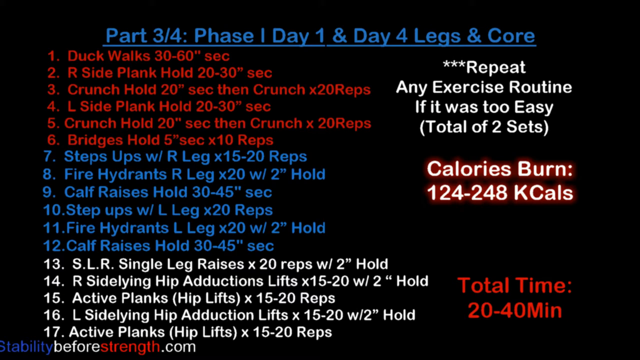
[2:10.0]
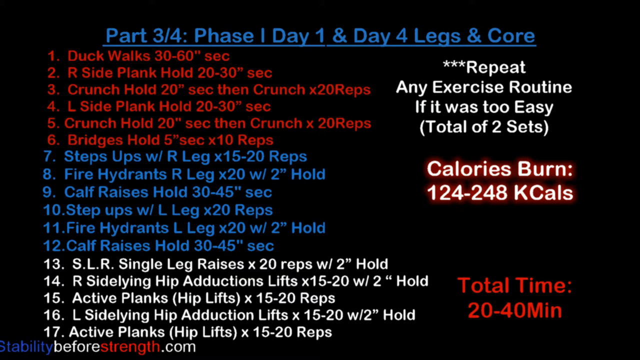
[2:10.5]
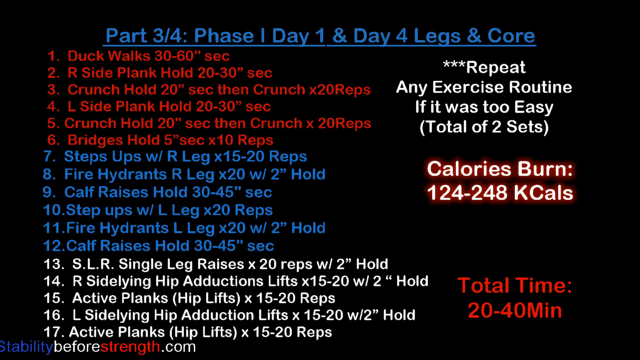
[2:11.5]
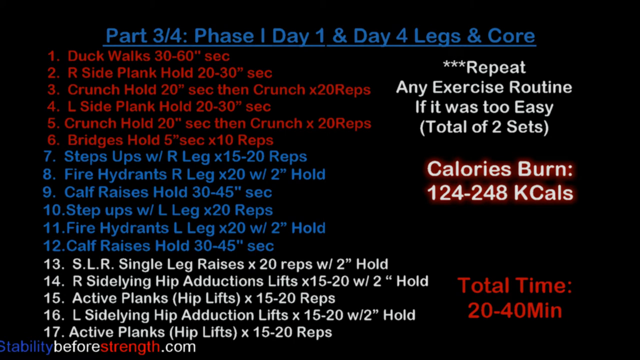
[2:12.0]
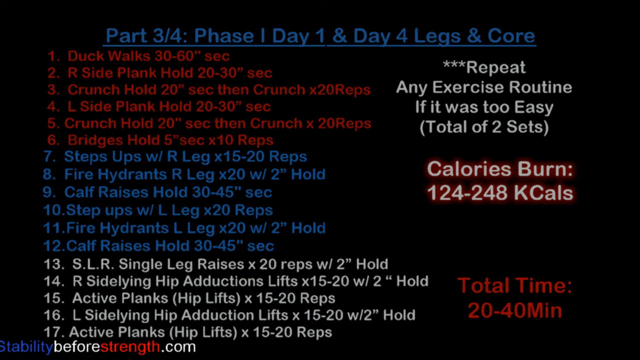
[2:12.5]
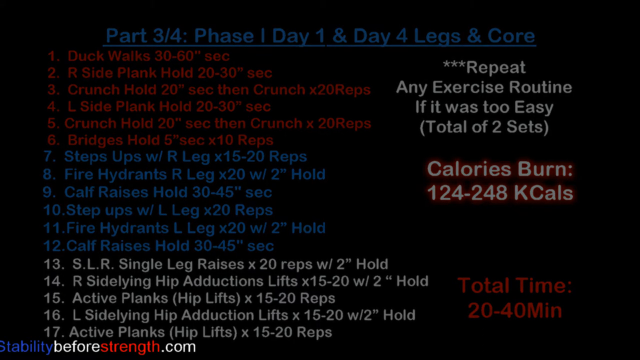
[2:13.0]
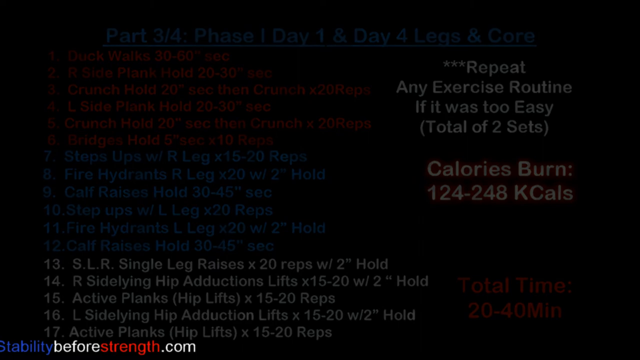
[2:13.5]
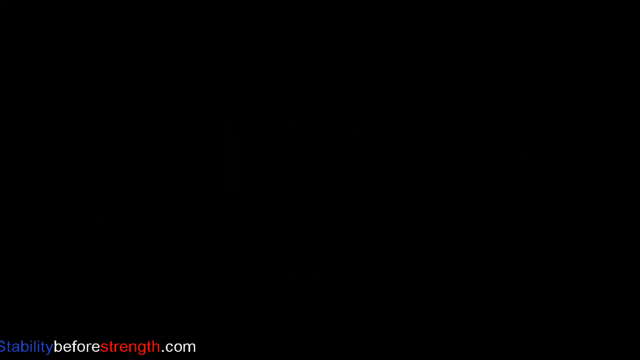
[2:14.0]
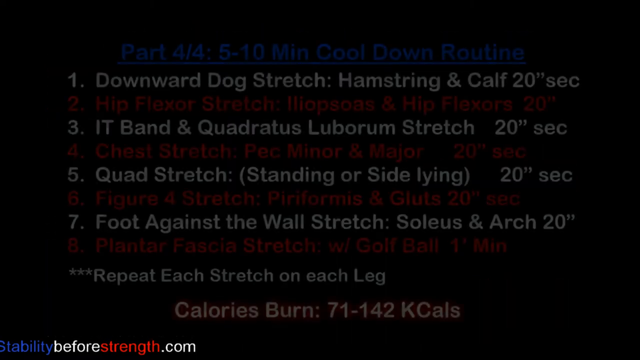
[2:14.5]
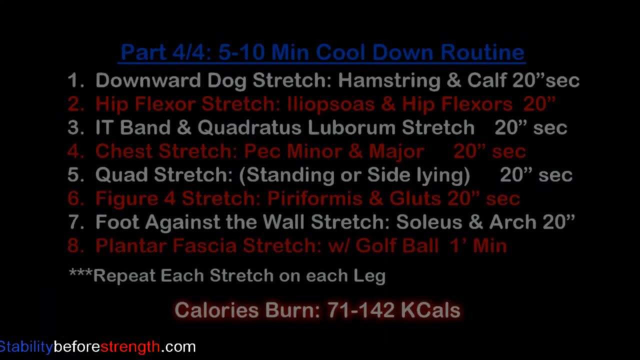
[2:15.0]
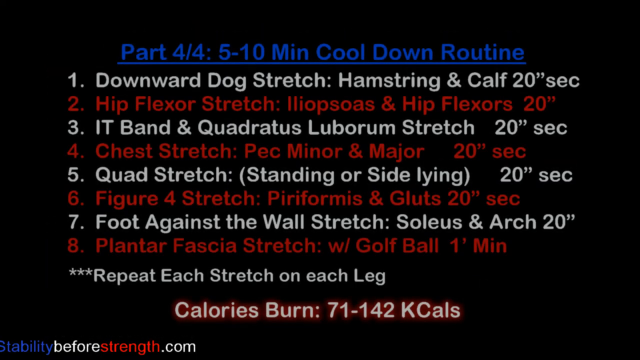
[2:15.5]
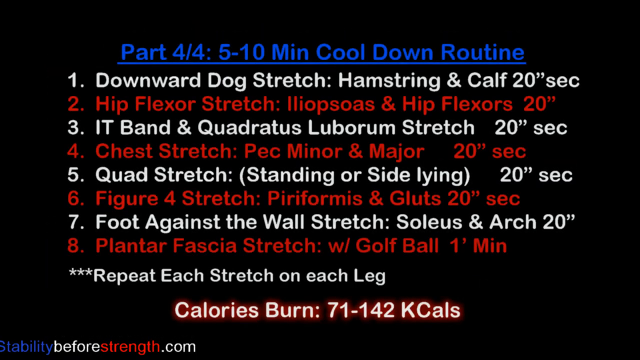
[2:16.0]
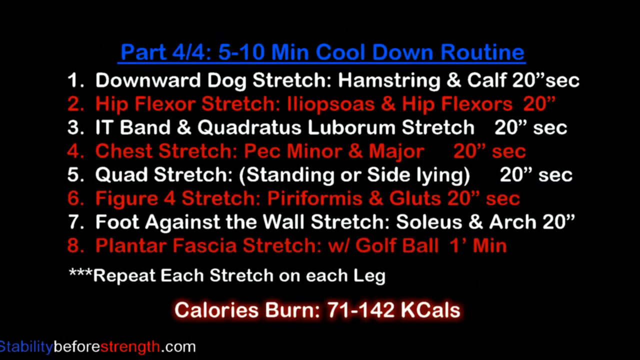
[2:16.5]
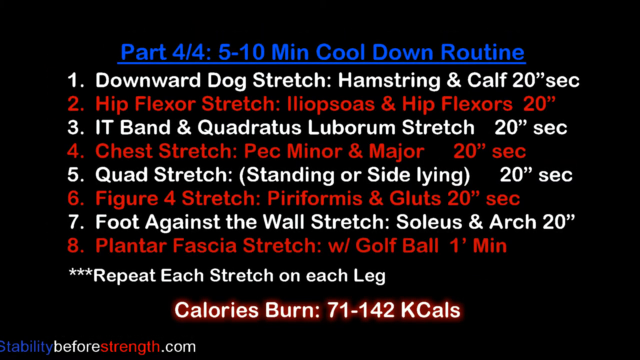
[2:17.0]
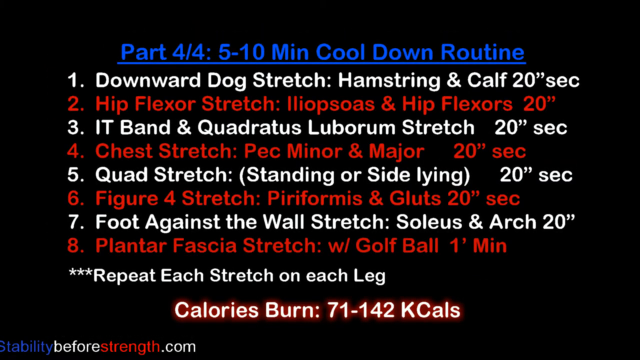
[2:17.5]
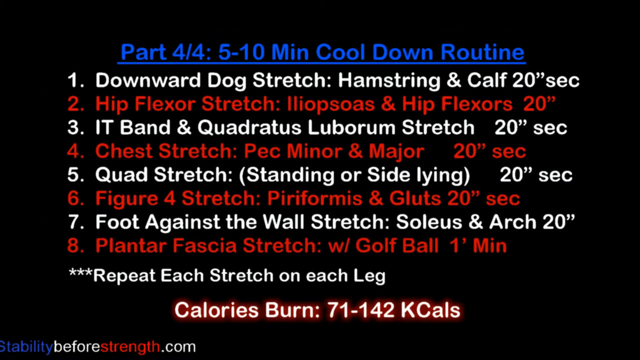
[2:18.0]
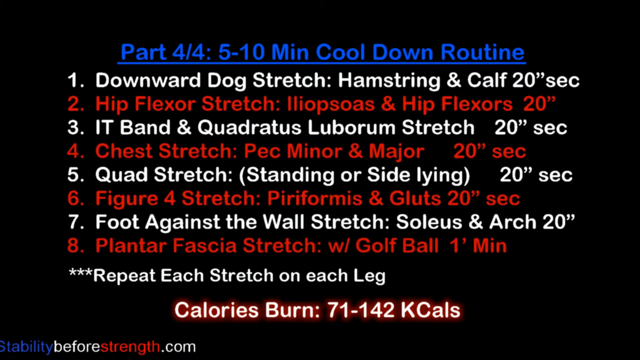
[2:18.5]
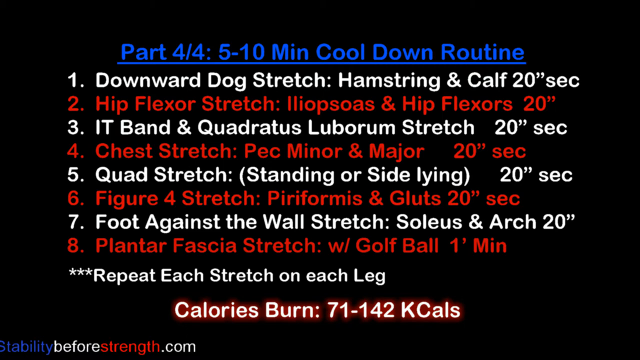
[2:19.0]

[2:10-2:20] Numbers 13 to 17 are the white exercises: number 13 is SLR, single leg raises, 20 reps with a 2 second hold; number 14 is R side laying hip abduction lifts, 15 to 20 with a 2 second hold; number 15 is active planks, hip lifts, 15 to 20 reps; number 16 is L side-lying hip abduction lifts, 15 to 20 with a 2 second hold; and number 17 is active planks hip lifts, 15 to 20 reps. The screen then fades out to part 4 of 4, a 5 to 10 minute cool down routine. The top part is written in blue and the rest alternates white and red, with the odd numbers in white and the even numbers in red. There are 8 different exercises, and at the bottom an asterisk precedes the text "repeat each stretch on each leg".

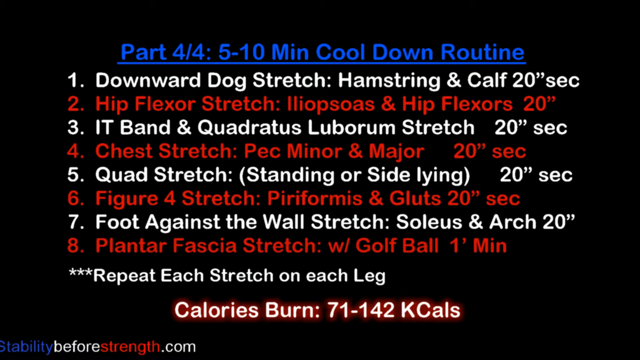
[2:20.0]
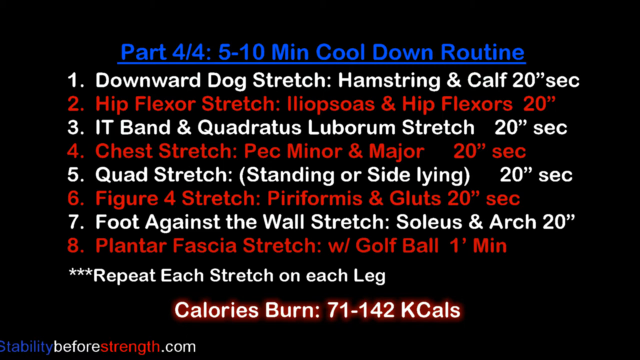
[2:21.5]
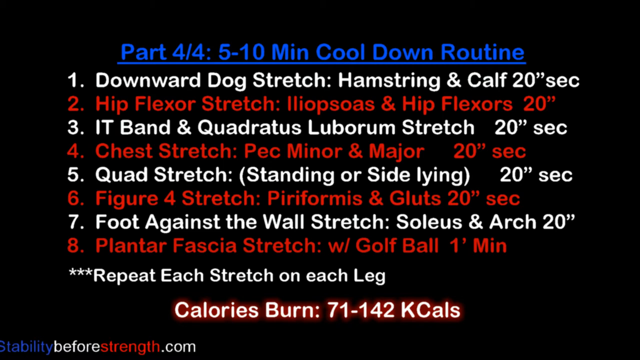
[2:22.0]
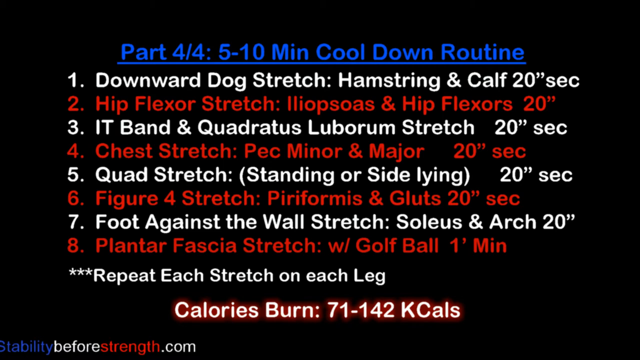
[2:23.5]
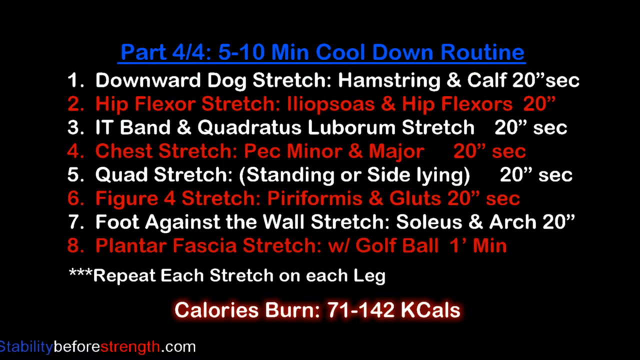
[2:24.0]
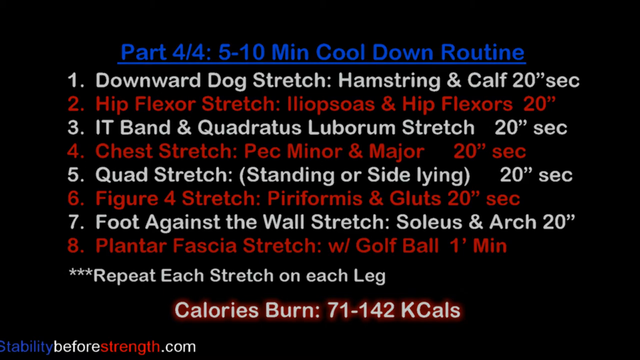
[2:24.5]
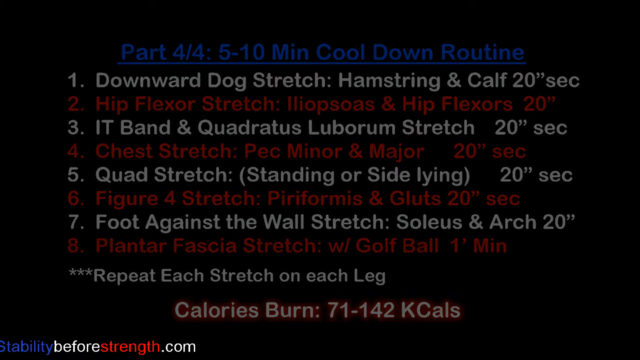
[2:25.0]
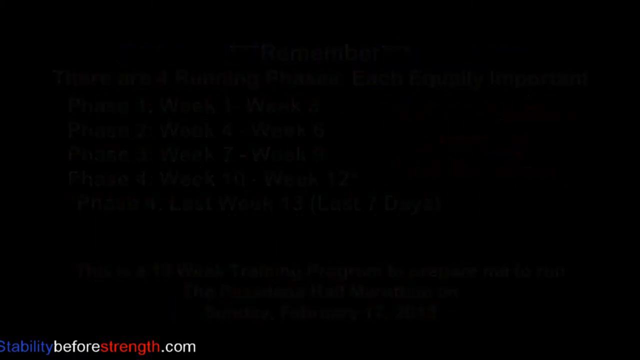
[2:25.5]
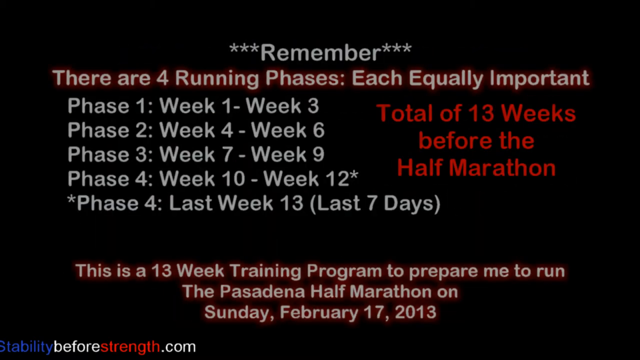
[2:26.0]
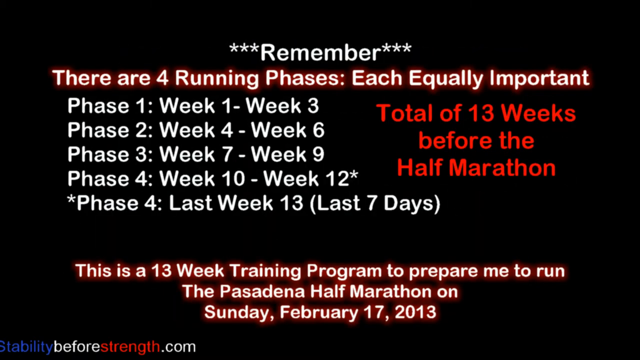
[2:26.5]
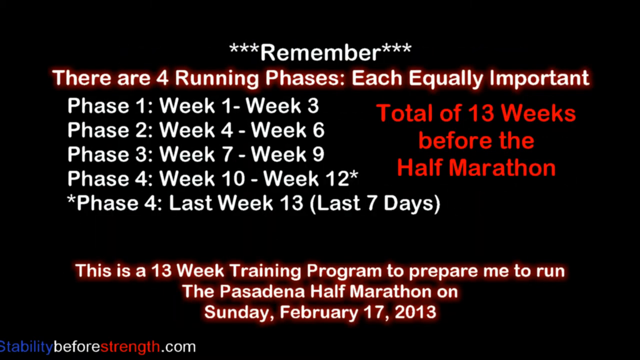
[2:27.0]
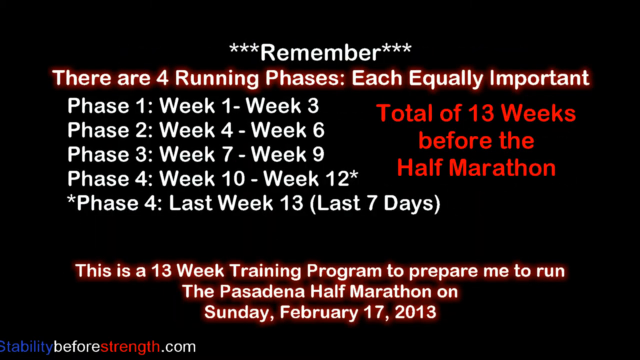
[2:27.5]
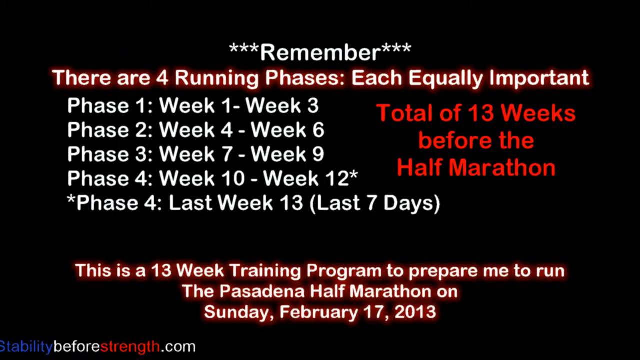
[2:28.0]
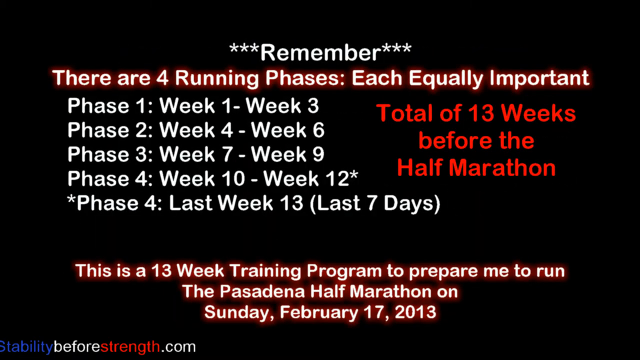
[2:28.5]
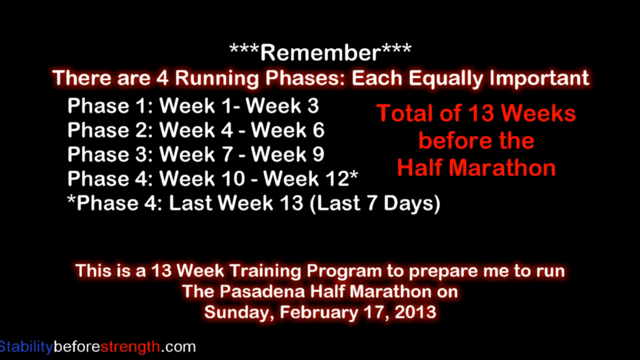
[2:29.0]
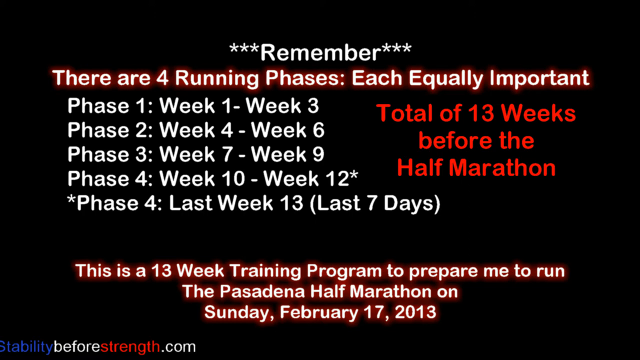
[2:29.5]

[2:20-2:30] The list reads: number one, downward dog stretch; number two, hip flexor stretch; number three, IT band and quad stretch; number four, a chest stretch; number five, a quad stretch; number six, a figure four stretch; number seven, a foot against the wall stretch; and number eight, a plantar fascia stretch. The screen then fades out to another black screen. At the top, in white, "Remember" appears between three asterisks on each side. Then, in white lettering with a red border, it says "there are four running phases each equally important", followed by the four phases and the weeks for each. On the right, in red, it says "a total of 13 weeks before the half marathon".